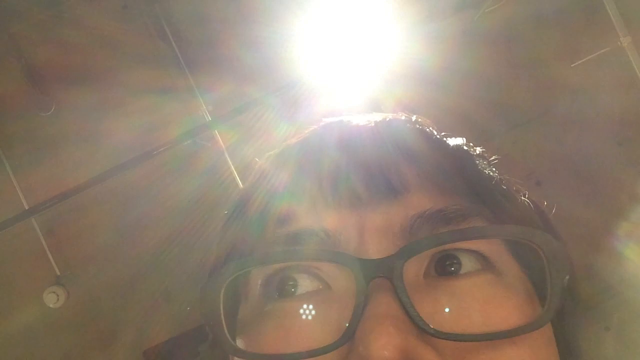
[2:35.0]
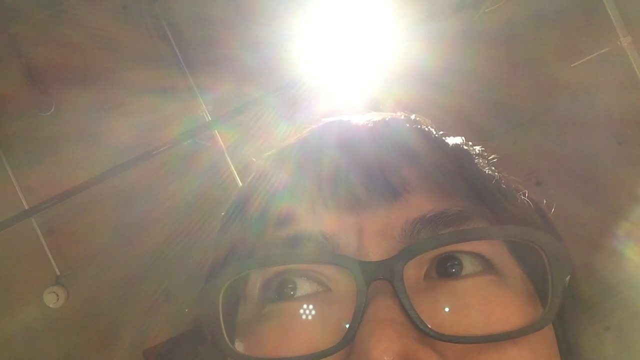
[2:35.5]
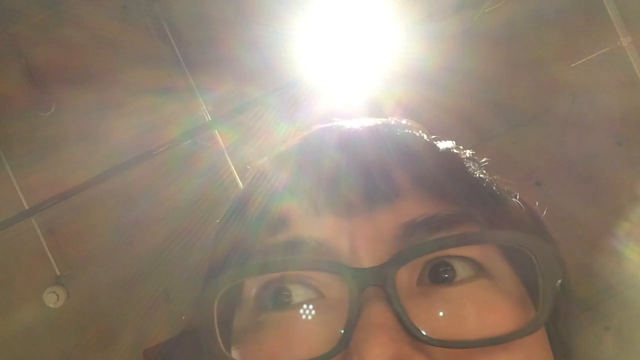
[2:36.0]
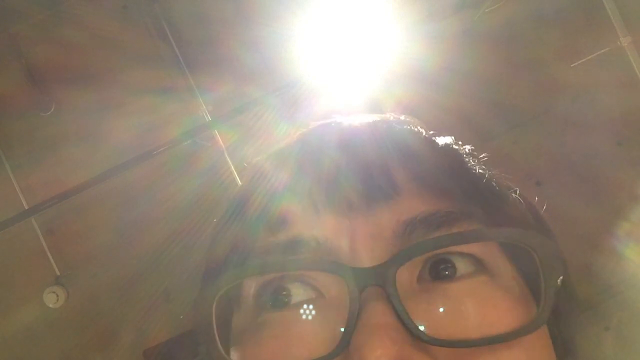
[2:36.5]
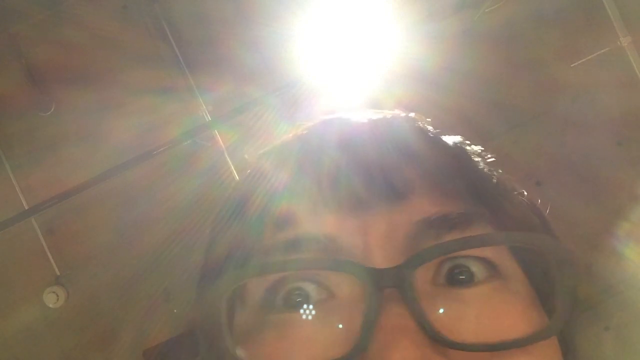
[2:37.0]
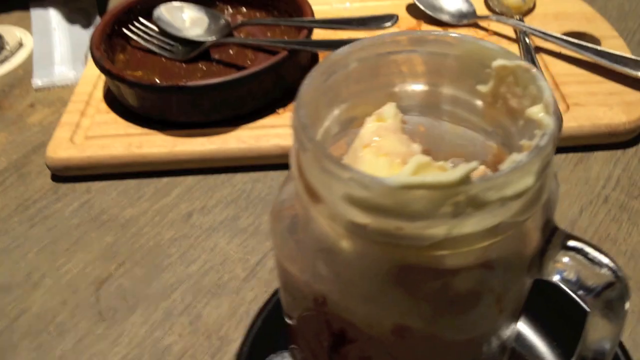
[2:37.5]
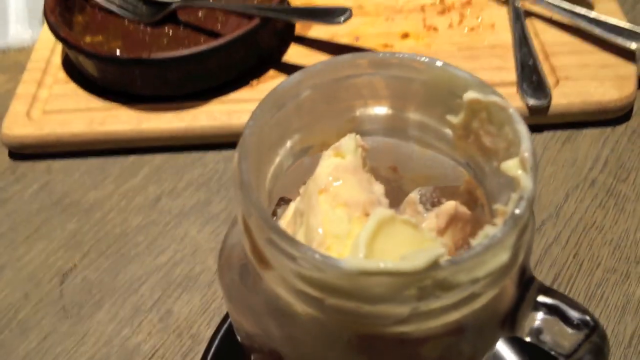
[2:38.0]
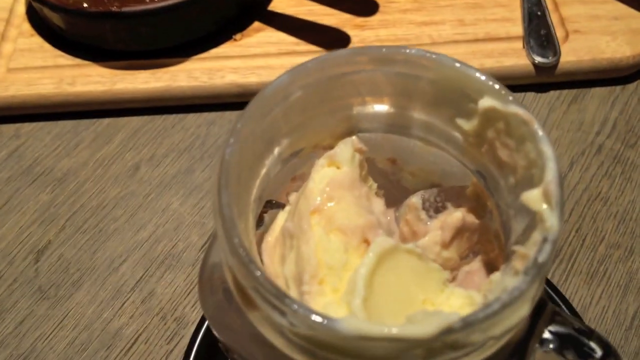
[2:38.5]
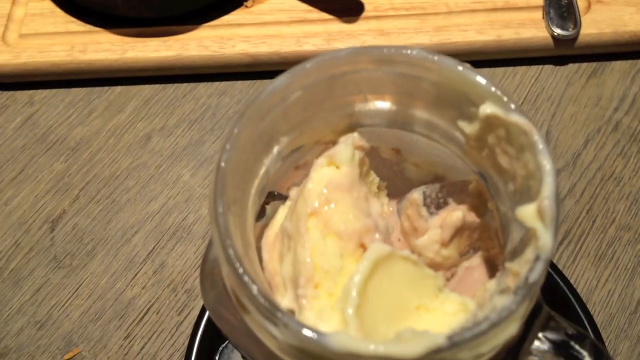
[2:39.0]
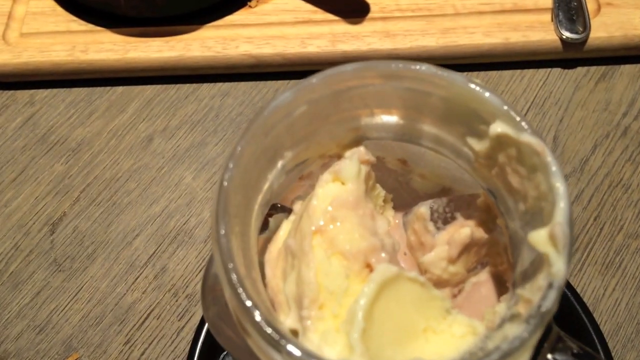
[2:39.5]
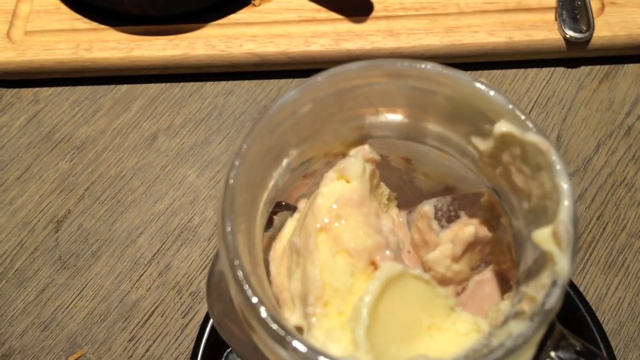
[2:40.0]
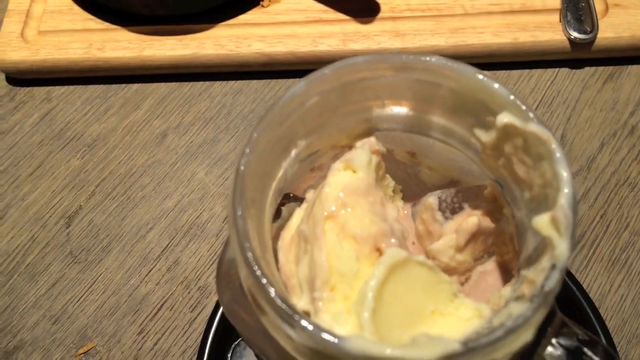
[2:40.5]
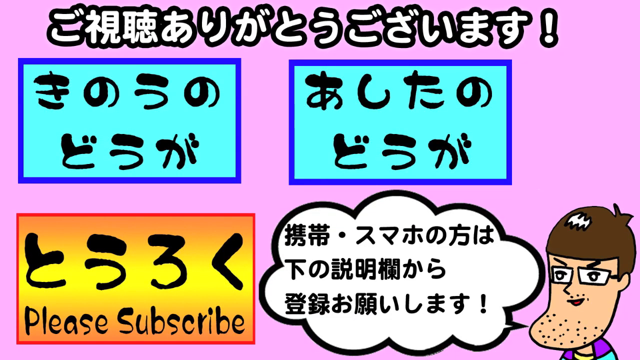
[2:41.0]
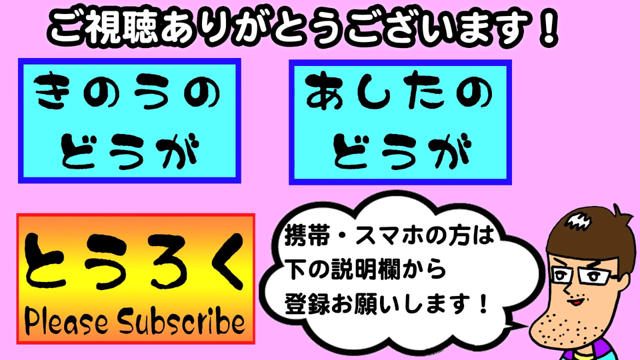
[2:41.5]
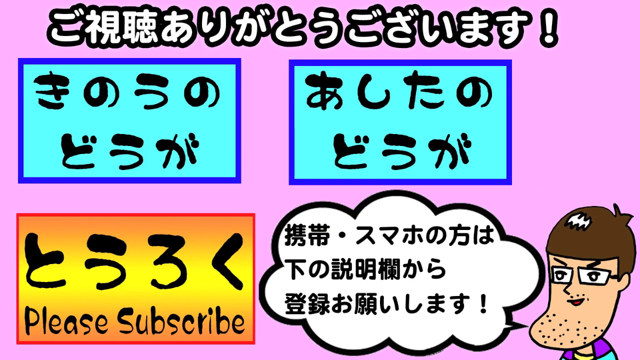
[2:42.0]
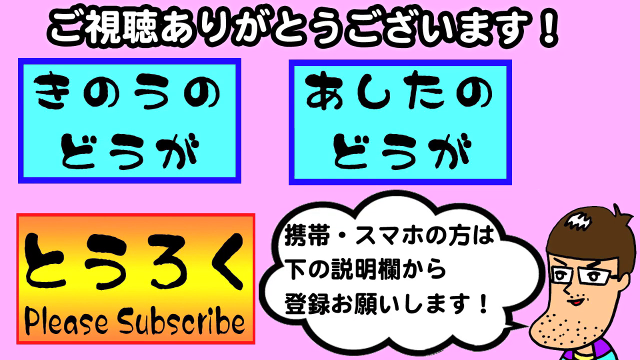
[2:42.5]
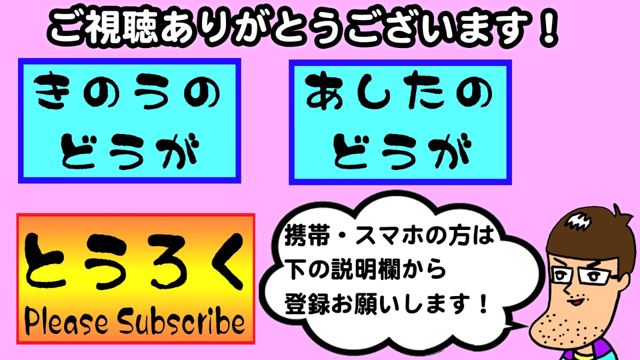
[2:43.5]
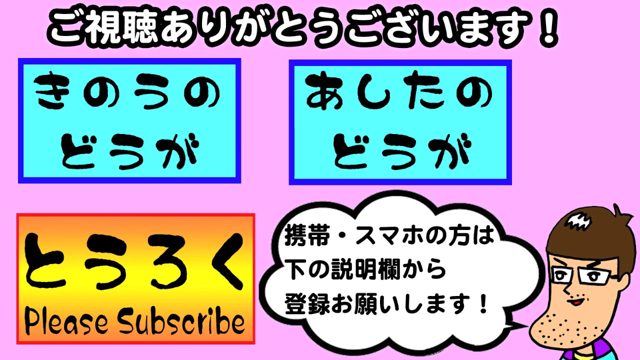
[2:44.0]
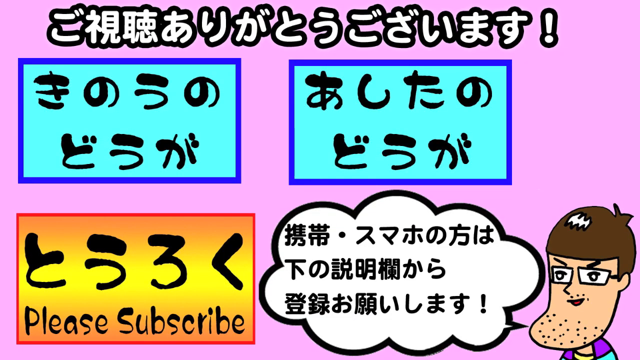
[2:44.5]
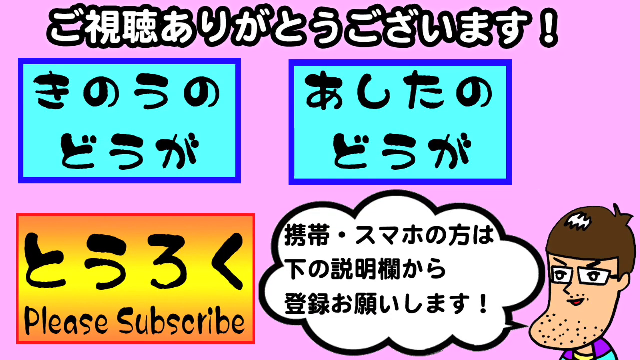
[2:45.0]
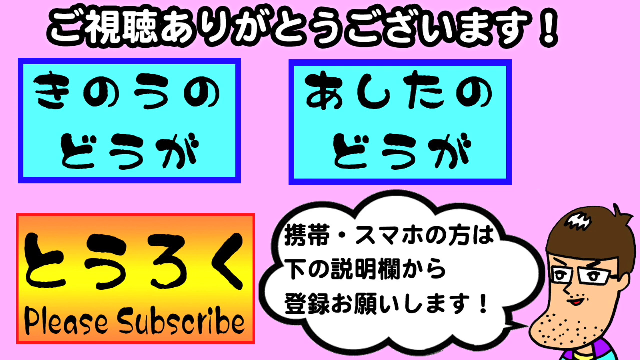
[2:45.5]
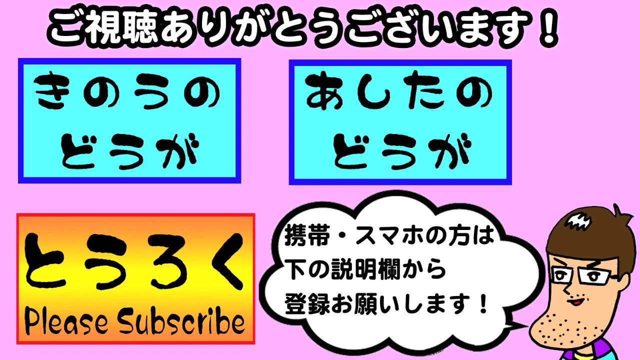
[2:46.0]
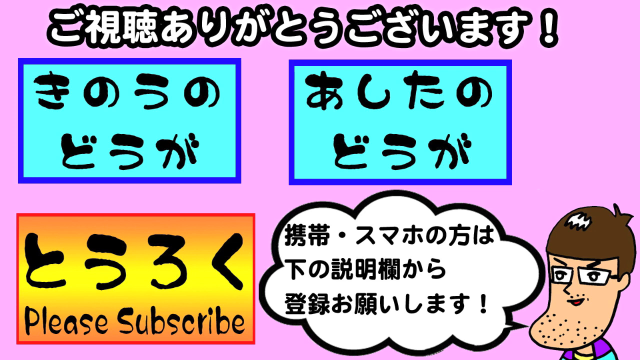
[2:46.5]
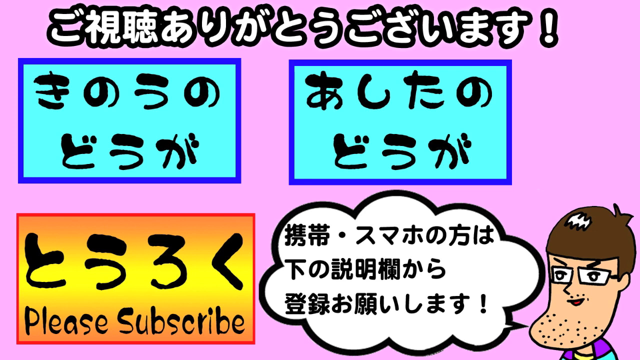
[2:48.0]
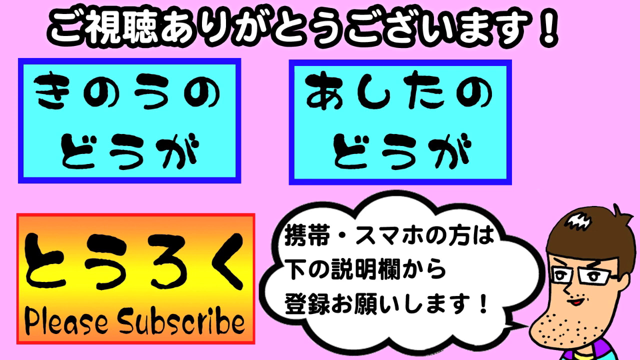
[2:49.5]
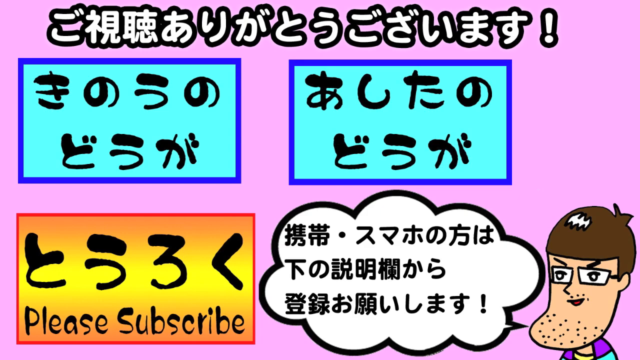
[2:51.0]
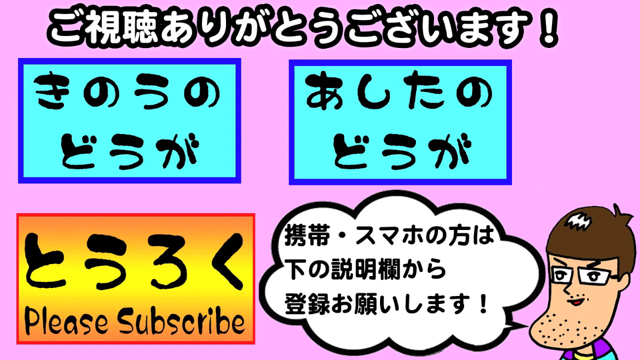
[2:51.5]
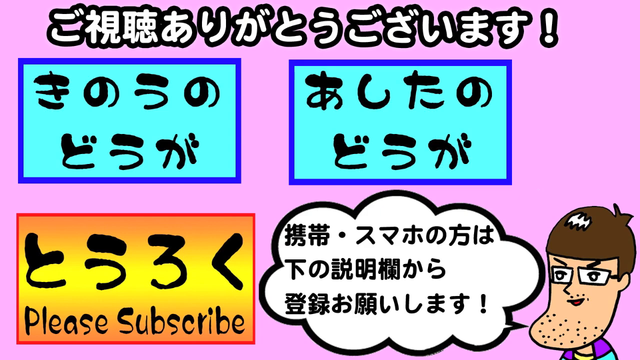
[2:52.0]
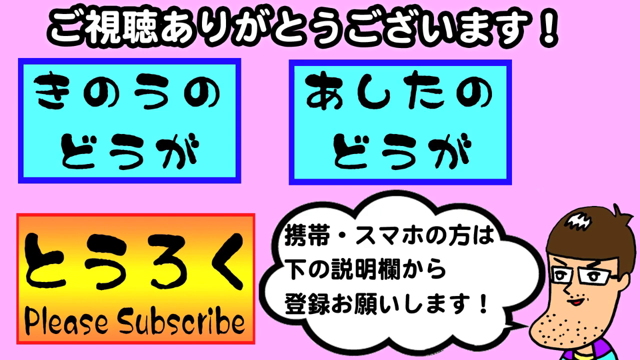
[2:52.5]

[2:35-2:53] The mason jar ice cream is shown, then the video cuts to the man in selfie mode making another funny expression; he seems to be in awe or just surprised but looks very happy. It then cuts to the end screen of his YouTube channel, showing the same cartoon character from the introduction of the video in the bottom right corner. There is a Japanese or Asian title and three boxes of text. The two boxes on top have a light blue background, a dark blue frame, and black text. The third box, on the bottom left, is a gradient orange with a red frame; it says something in Japanese, and underneath it says "please subscribe". To the right of that is what looks like a word cloud of various characters and text, which looks like a speech bubble coming out of the character.